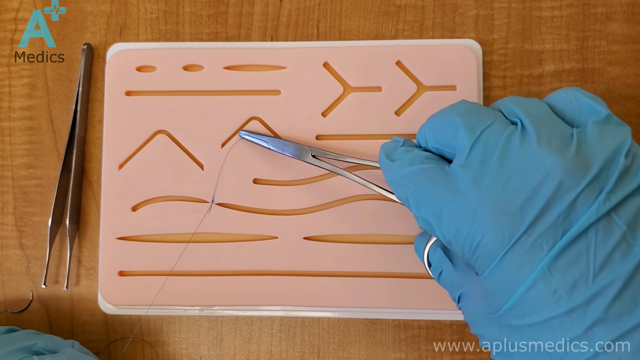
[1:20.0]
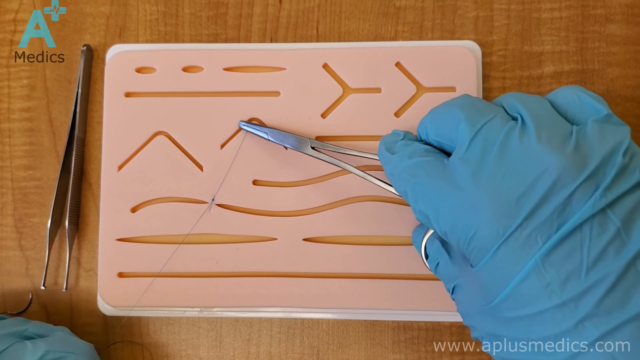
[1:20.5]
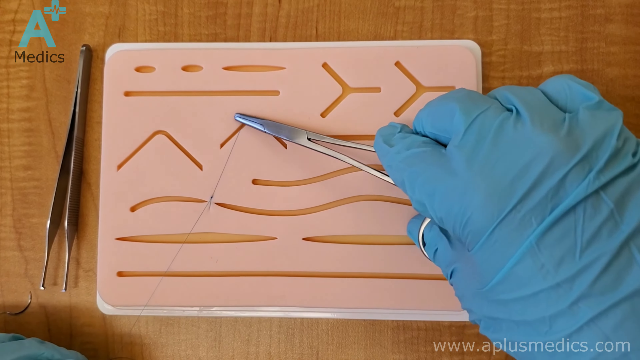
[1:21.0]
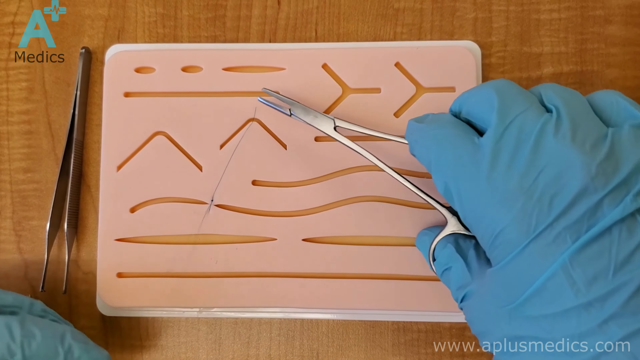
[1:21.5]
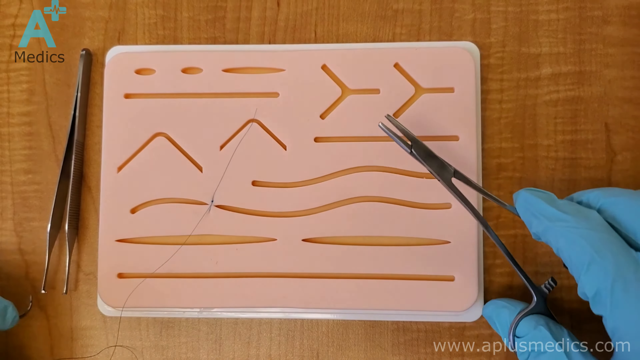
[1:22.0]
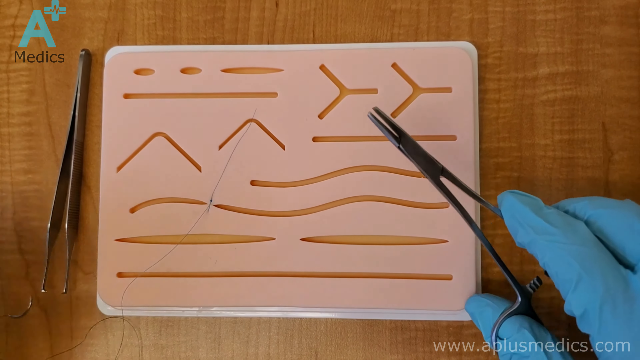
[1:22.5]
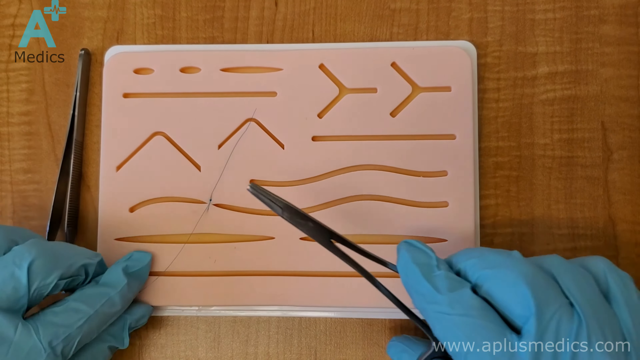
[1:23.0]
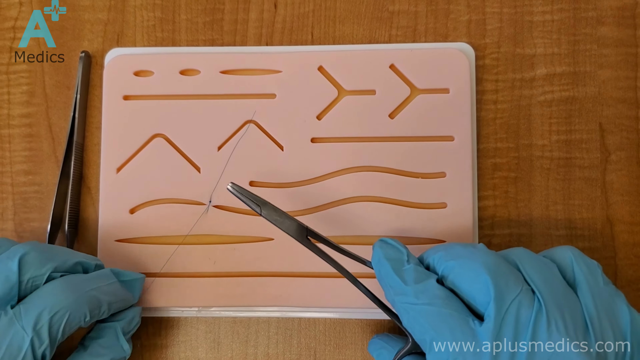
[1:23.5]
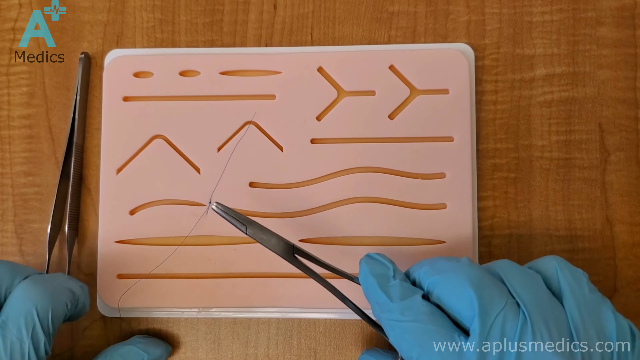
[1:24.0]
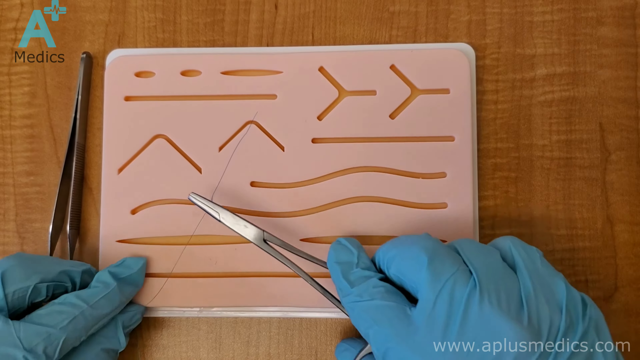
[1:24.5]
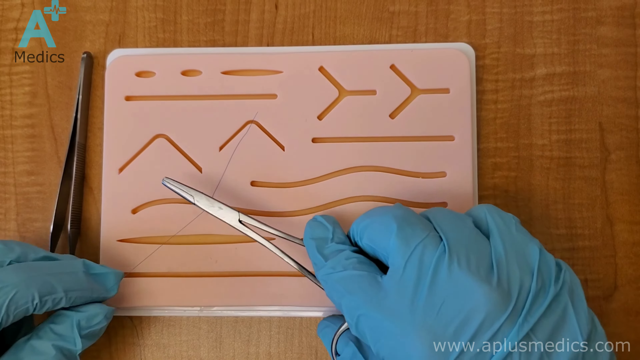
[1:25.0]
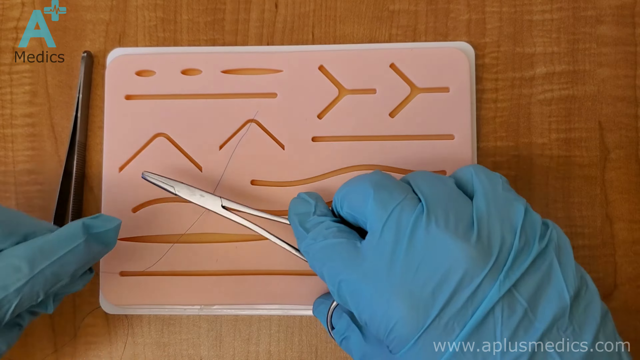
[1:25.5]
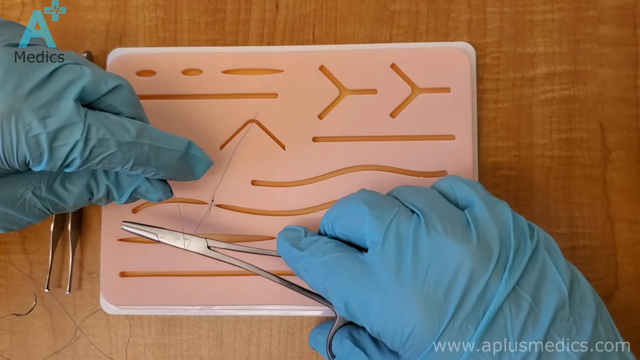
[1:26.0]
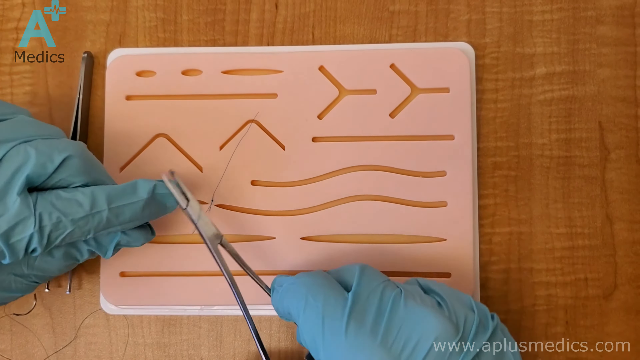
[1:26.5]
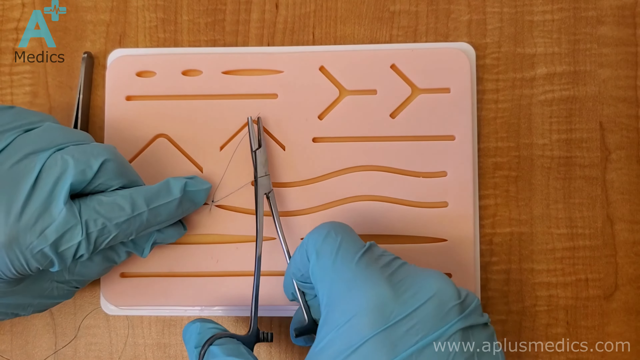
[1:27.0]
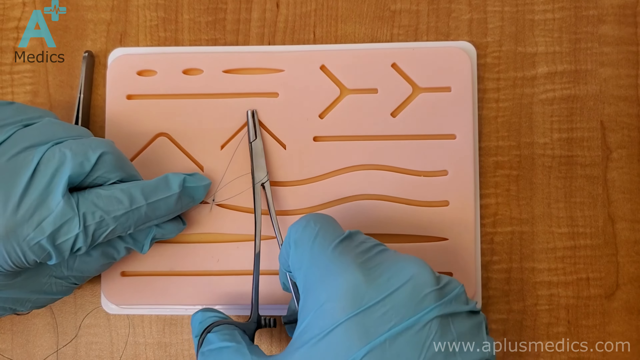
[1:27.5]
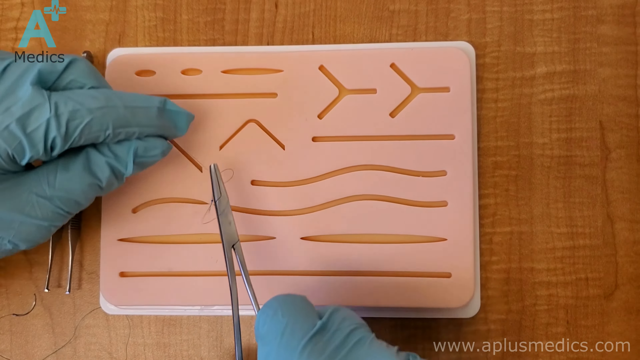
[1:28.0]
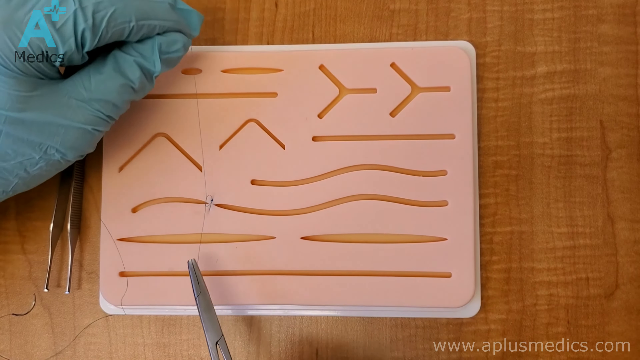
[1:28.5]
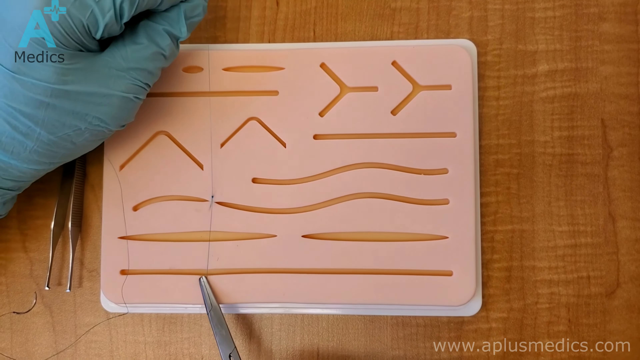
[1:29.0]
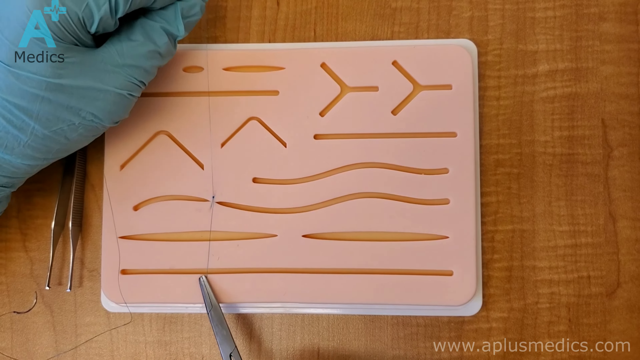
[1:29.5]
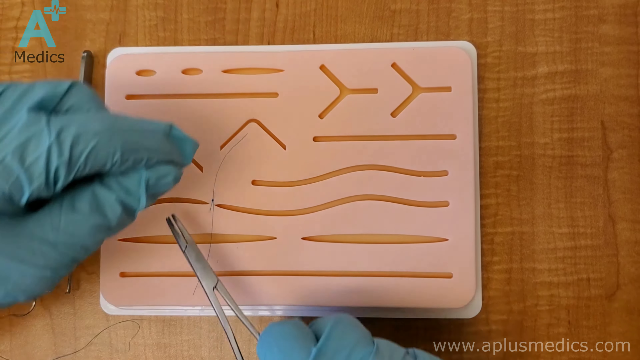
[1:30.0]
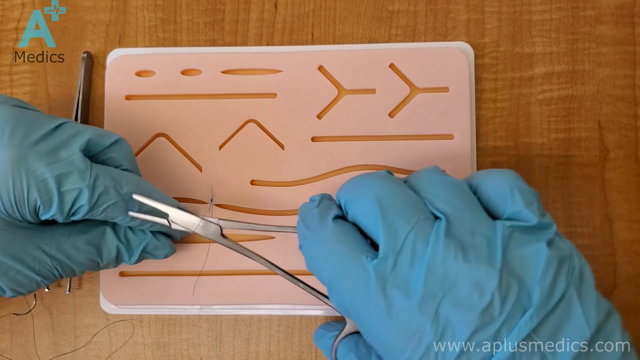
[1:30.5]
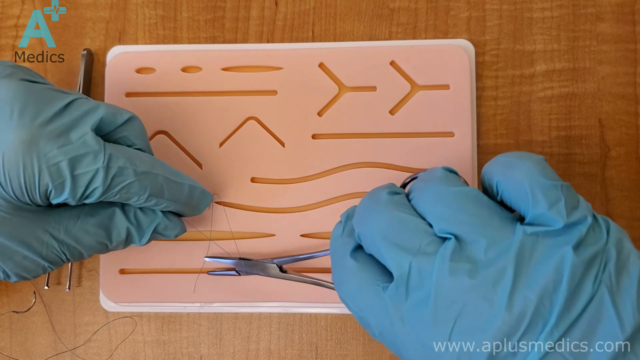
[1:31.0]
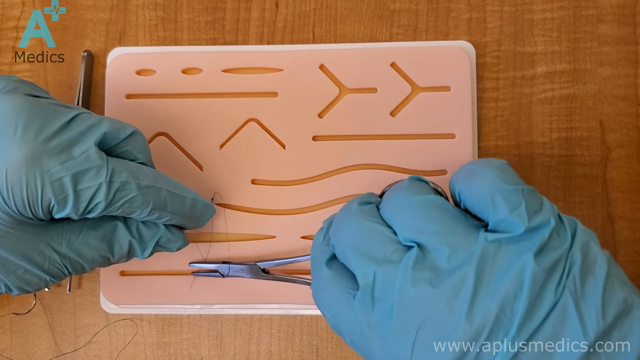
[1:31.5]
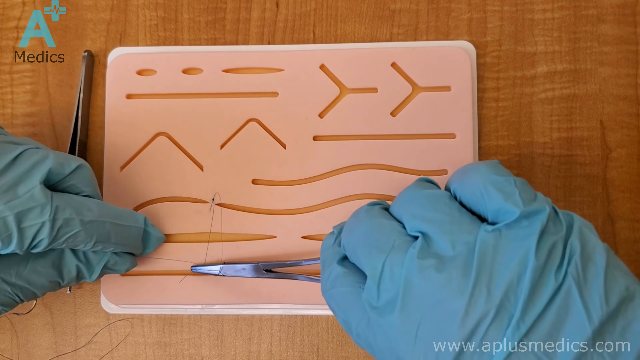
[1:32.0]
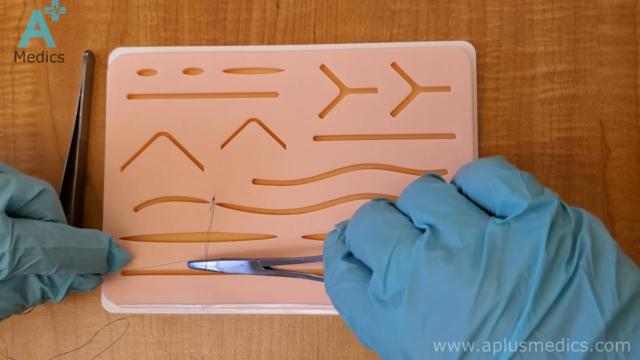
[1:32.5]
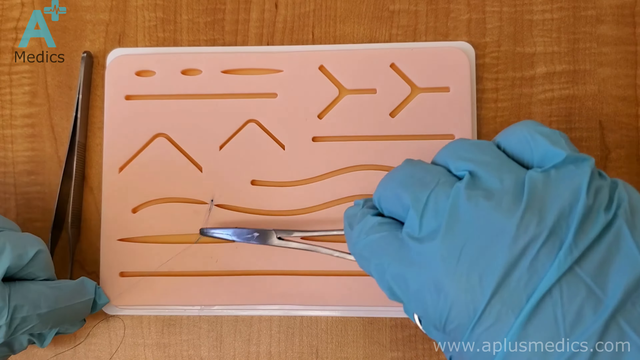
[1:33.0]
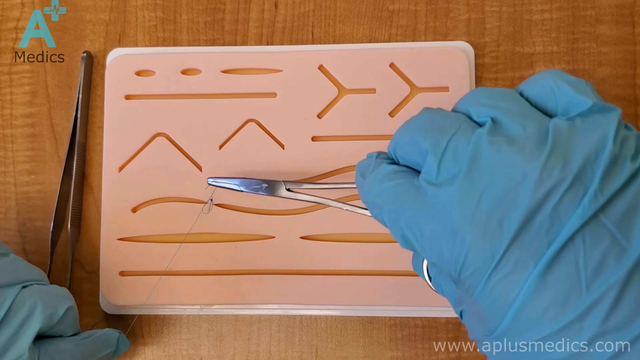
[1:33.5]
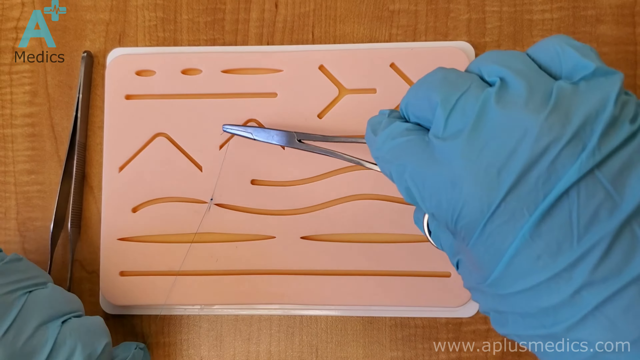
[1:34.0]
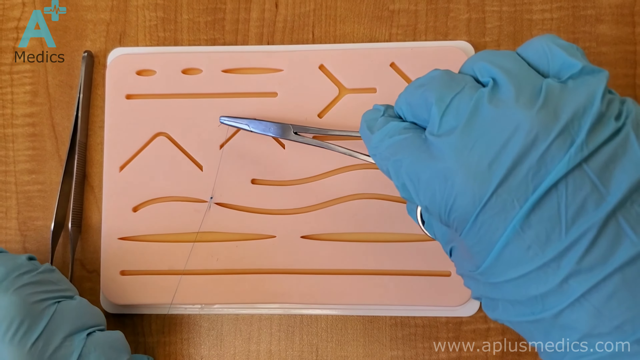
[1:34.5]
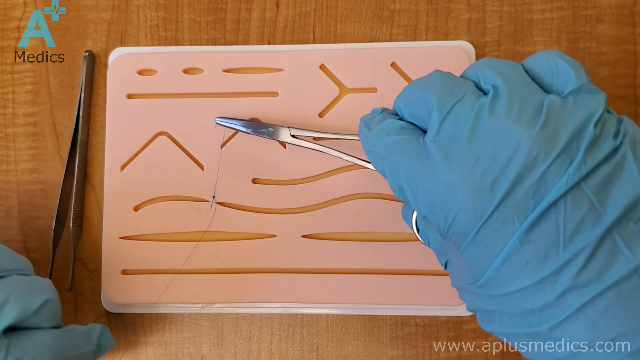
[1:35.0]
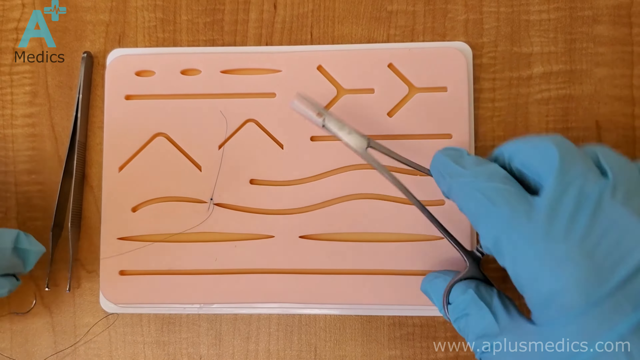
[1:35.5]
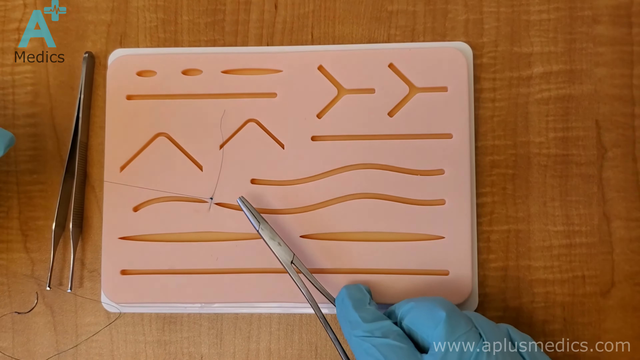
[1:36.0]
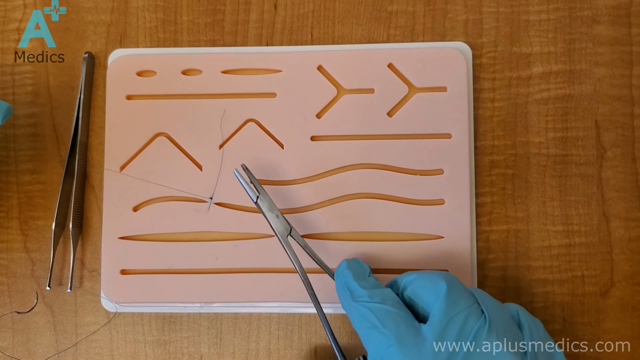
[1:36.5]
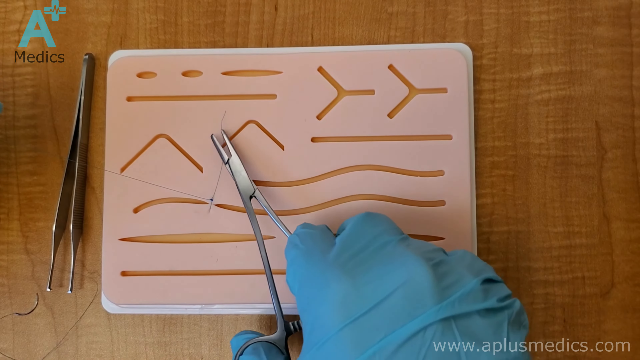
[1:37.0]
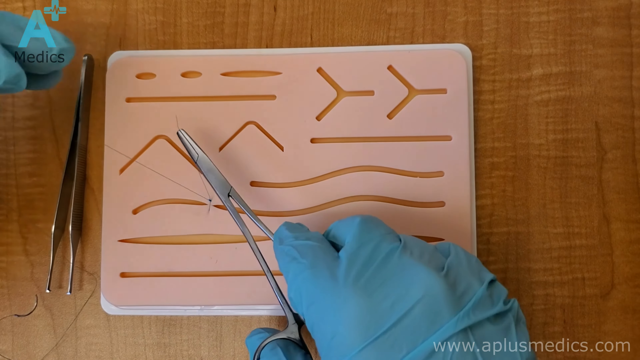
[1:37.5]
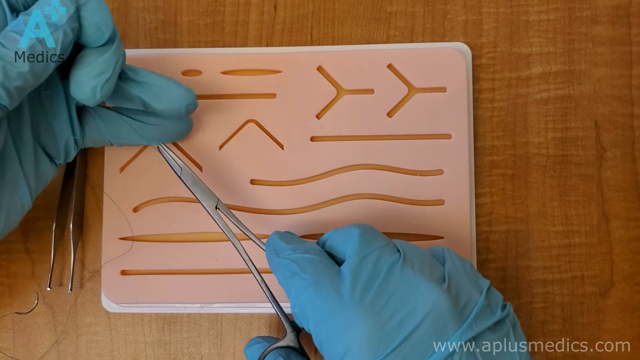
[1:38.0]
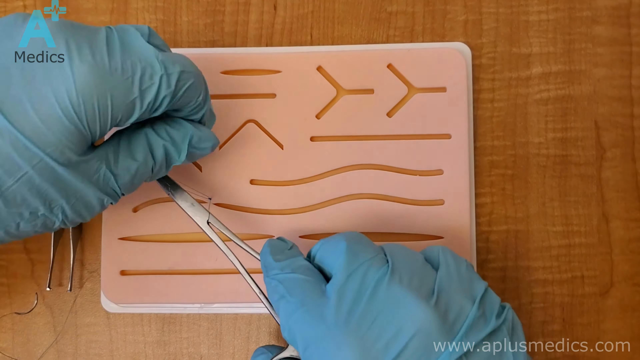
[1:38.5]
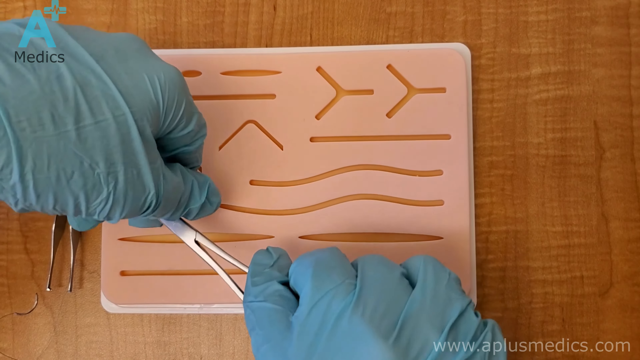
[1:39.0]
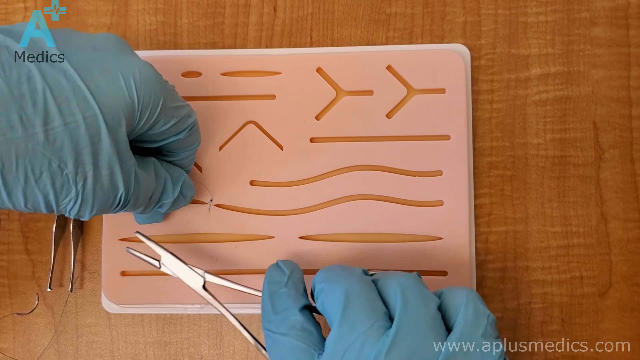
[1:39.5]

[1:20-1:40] The person in turquoise rubber gloves works with metal tools over a horizontal board, maybe made of foam, with different shapes carved or maybe etched out of it to form grooves. The person holds thread with the scissors in the right hand, then uses the left hand to wind the thread around the scissor and pulls it to create a second knot. The person then clips the end with the scissor and finishes tying the knot; apparently two stitches have now been created. The tweezer is still to the left of the board, with its handle pointing up and its prongs pointing down. The person doing the work is not visible, only the pair of turquoise rubber gloves. The board is on a brown wooden desk.